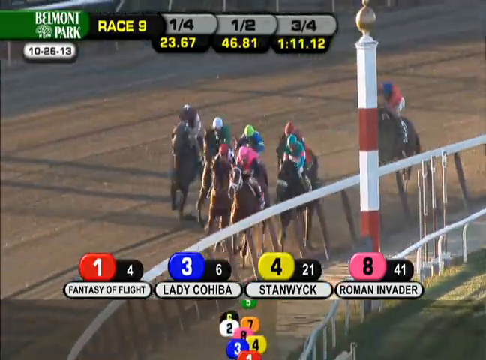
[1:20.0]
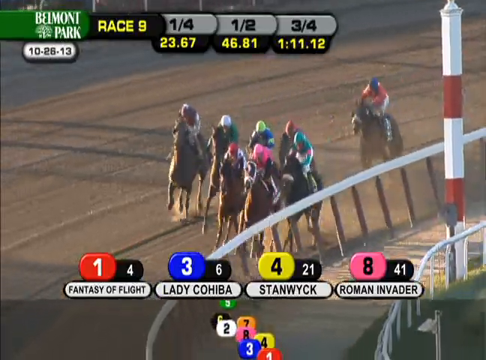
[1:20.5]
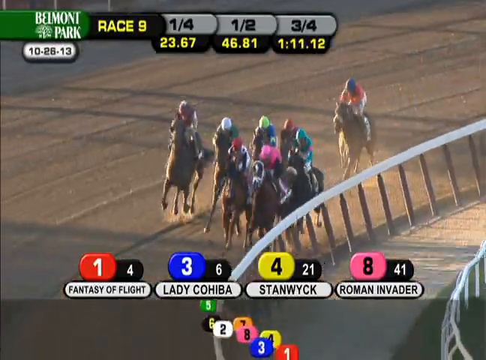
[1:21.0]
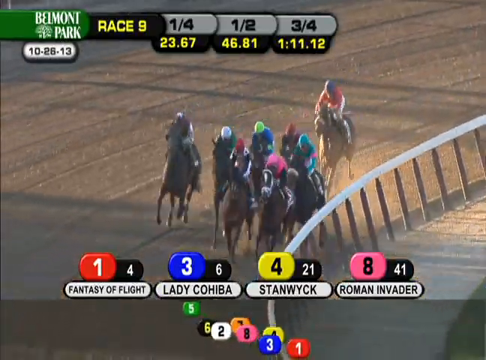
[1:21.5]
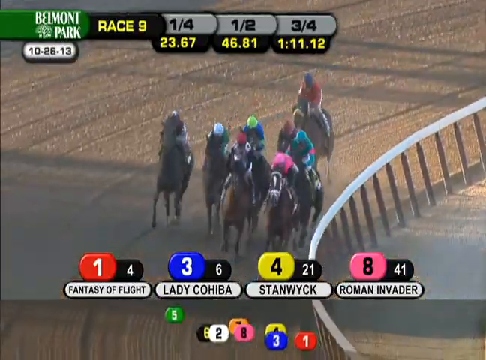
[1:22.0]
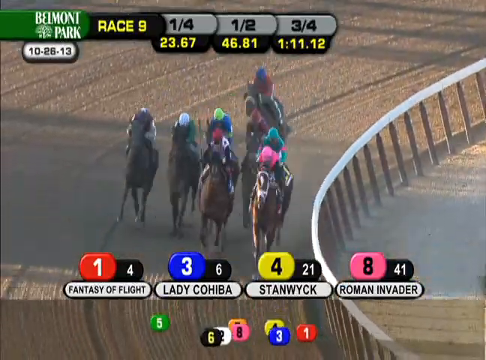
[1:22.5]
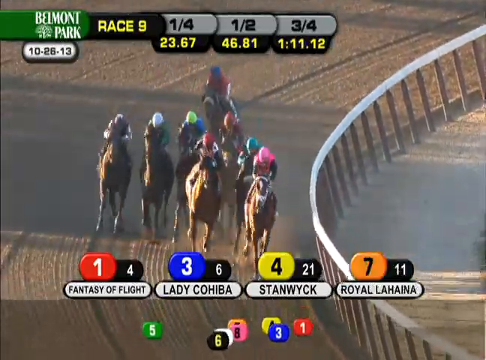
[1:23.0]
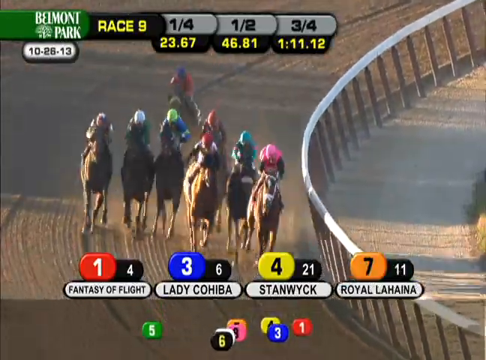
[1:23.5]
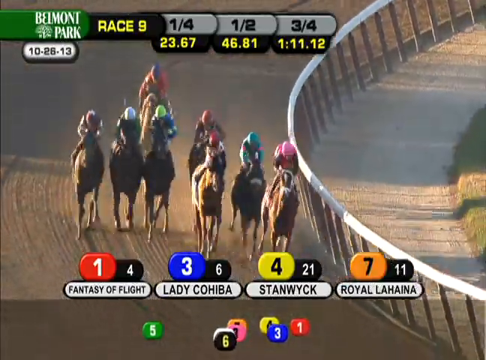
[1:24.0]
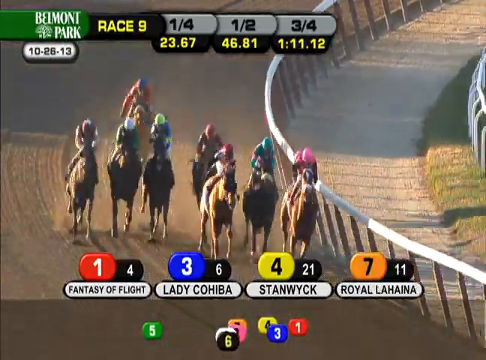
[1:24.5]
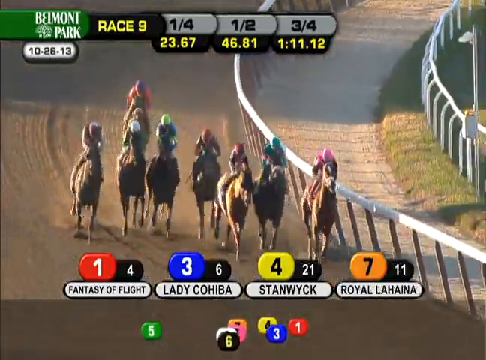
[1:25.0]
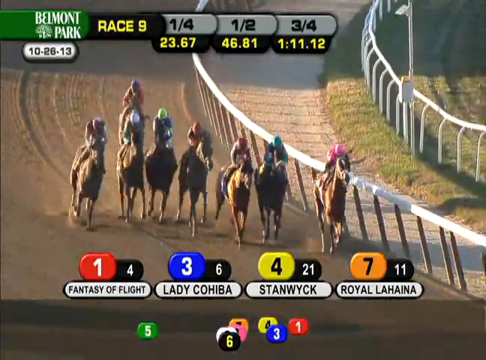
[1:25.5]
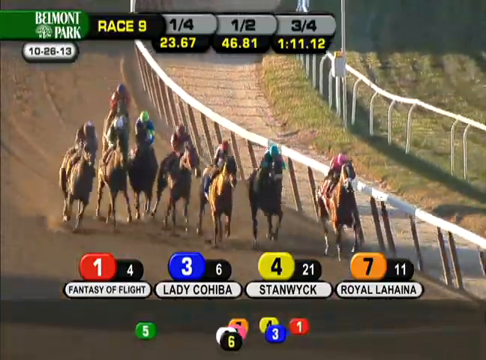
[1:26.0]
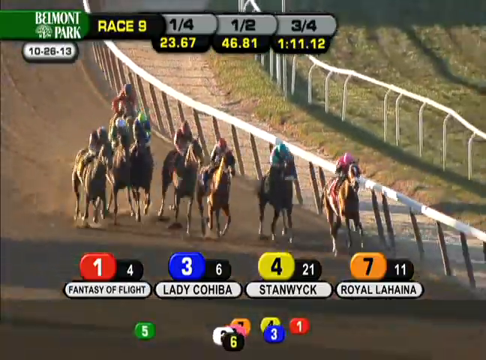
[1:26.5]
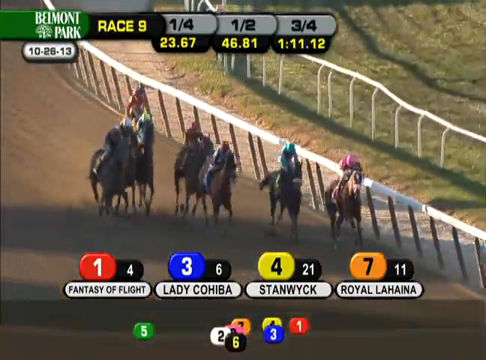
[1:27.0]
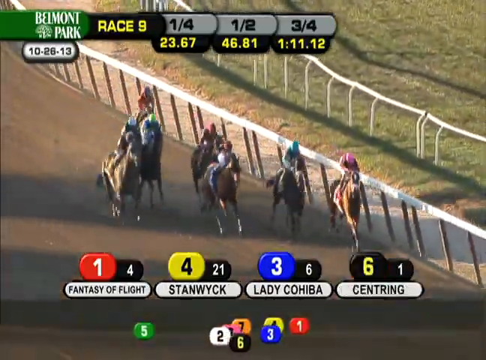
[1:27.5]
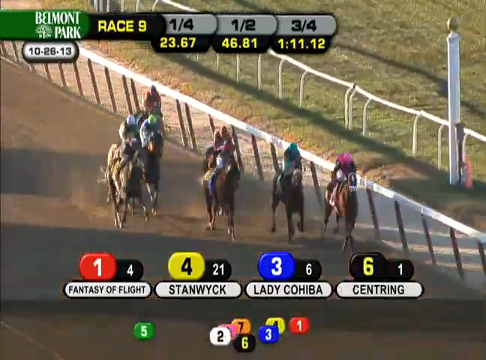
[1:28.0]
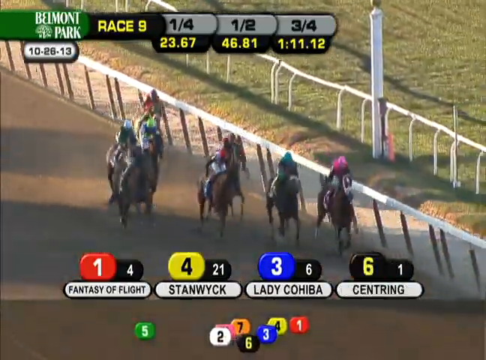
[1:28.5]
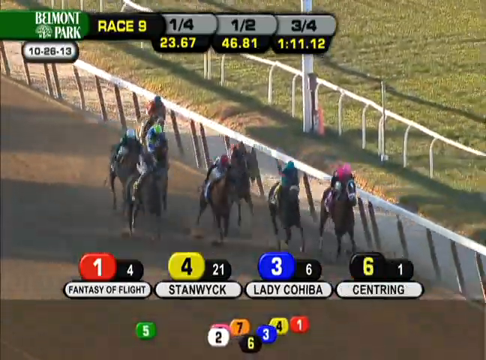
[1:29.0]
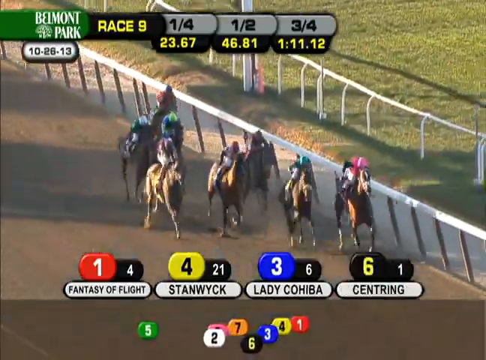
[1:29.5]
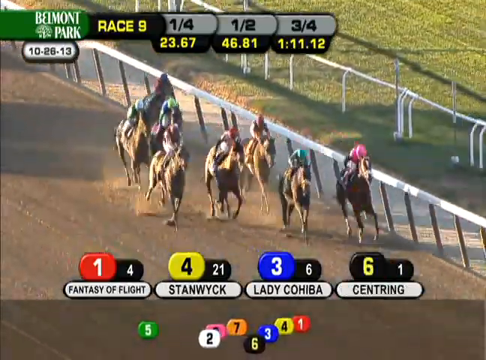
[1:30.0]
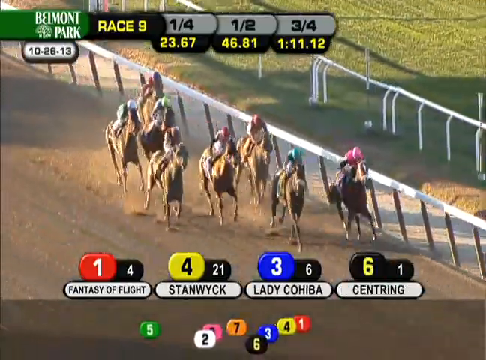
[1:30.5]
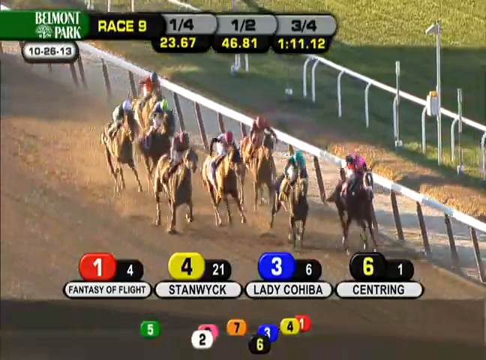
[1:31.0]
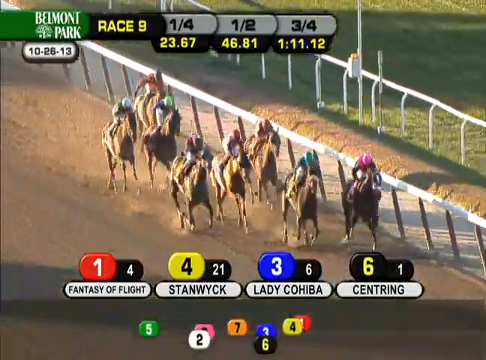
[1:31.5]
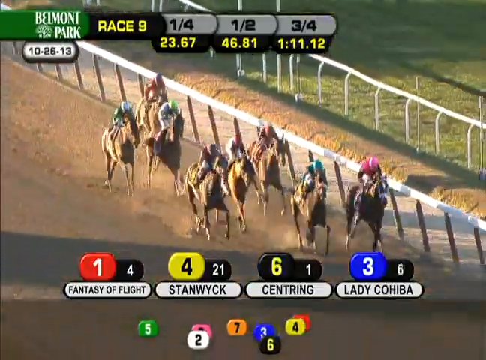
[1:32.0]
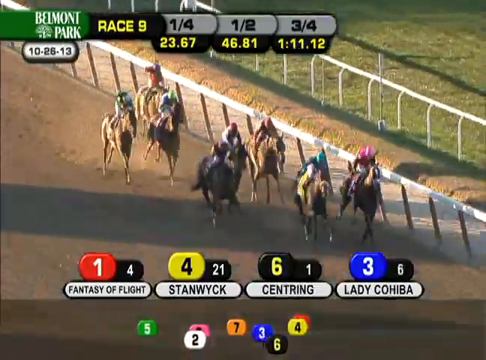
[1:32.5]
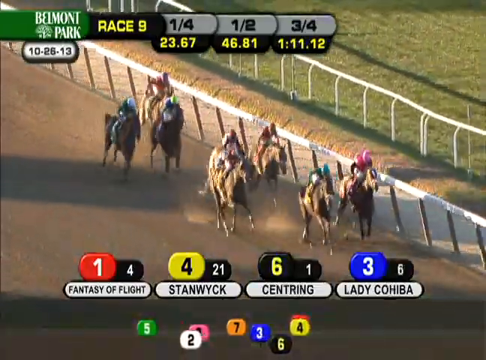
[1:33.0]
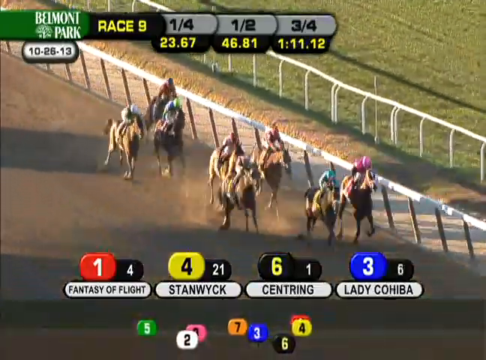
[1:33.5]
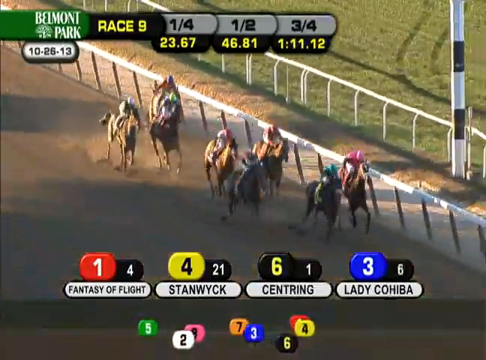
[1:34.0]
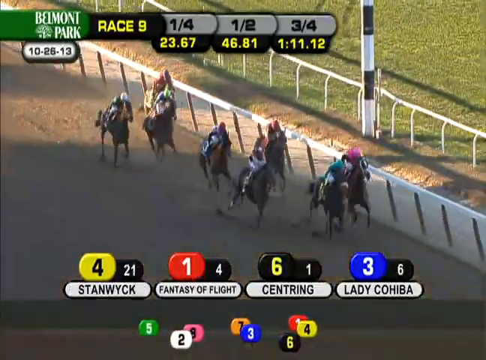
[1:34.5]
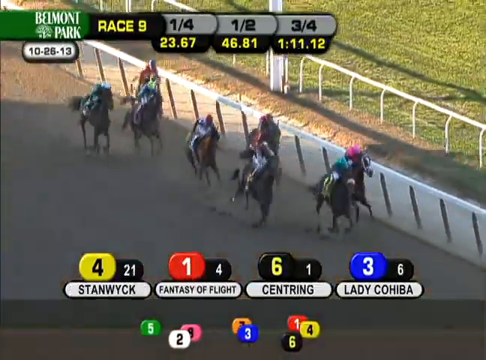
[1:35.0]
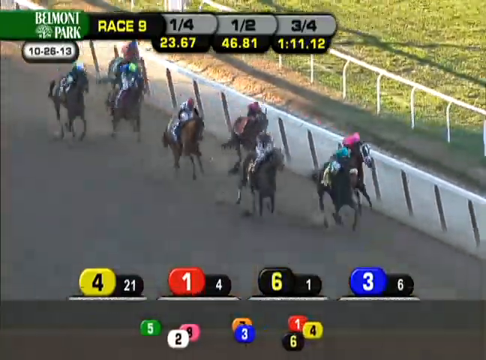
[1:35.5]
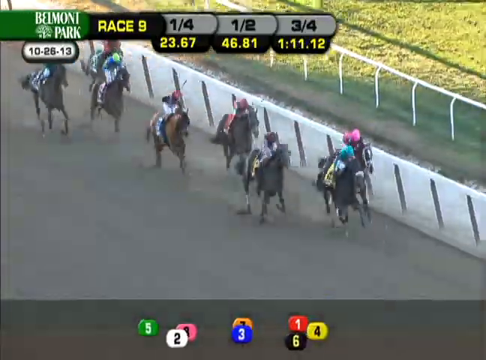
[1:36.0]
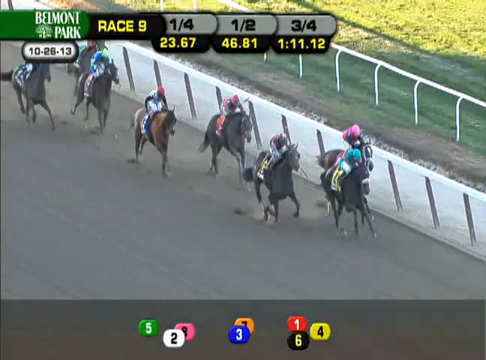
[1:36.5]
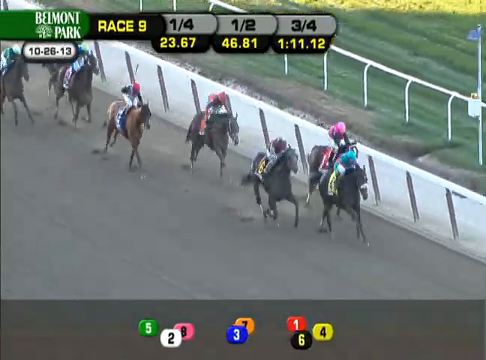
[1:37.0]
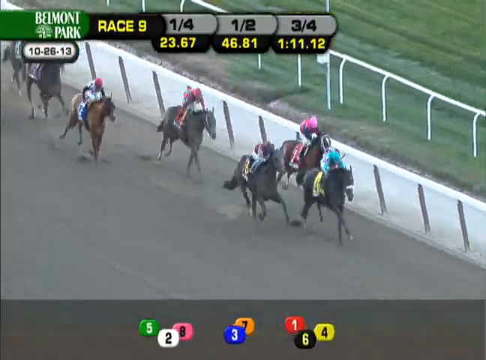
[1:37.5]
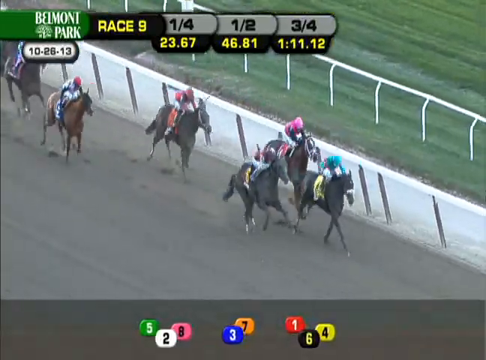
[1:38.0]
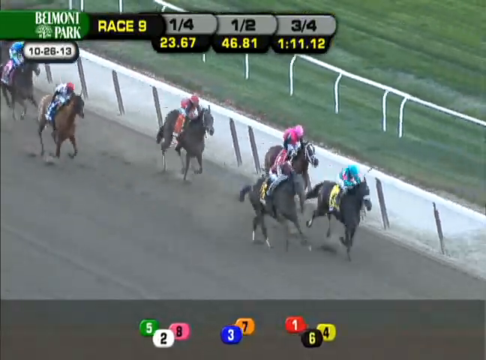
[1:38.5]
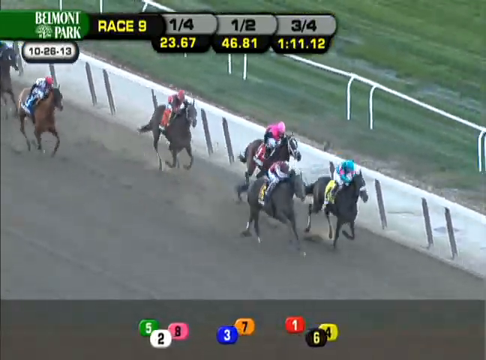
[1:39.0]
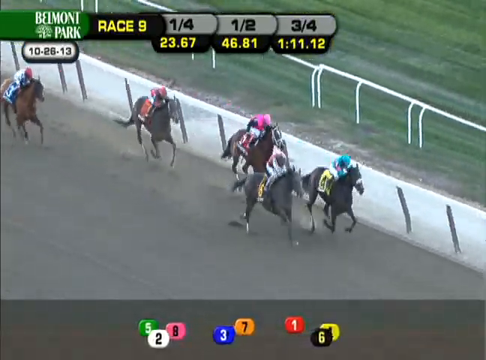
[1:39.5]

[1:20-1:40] Eight horses race down the track, each ridden by a jockey wearing a different colored uniform. At the top left of the screen are several text indicators: a logo for Belmont Park; an indicator reading "Race 9"; three odds indicators reading "1-4th, 23.67", "1-half, 46.81", and "3-4th, 1-11.12"; and a date indicator showing October 26th, 2013. Superimposed at the bottom of the screen is a list of the current top four: in first place, Fantasy of Flight; in second place, number 3, Lady Kahiba; in third place, number 4, Stanwyck; and in fourth place, number 8, Roman Invader. Icons for all eight horses at the bottom of the screen move back and forth in real time according to their relative positions. Fantasy of Flight, number 1, is in first place ahead of the pack, but Stanwyck gains on him, passes him to take the lead, and races ahead toward the finish.